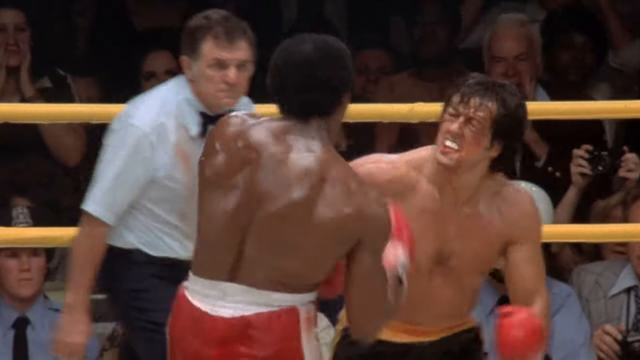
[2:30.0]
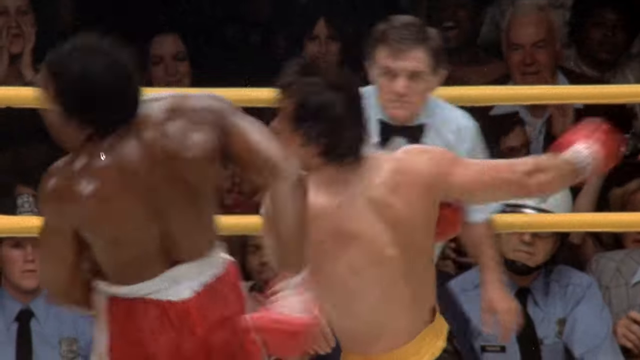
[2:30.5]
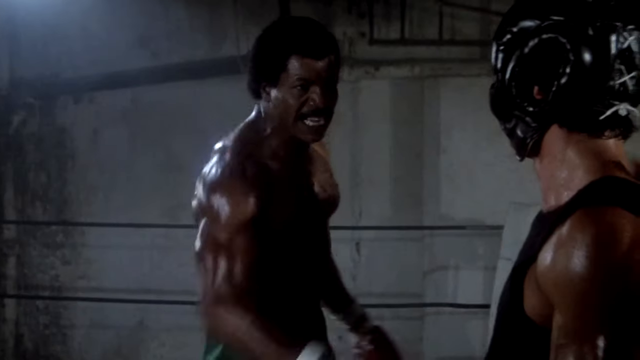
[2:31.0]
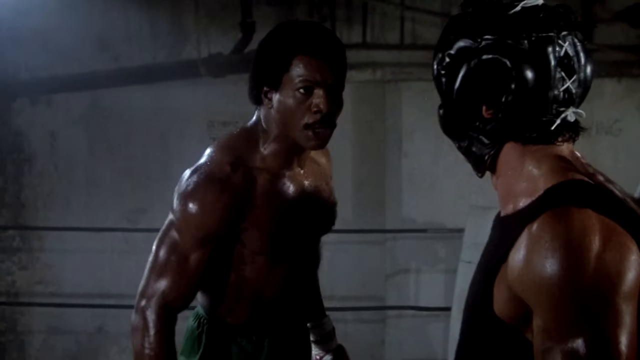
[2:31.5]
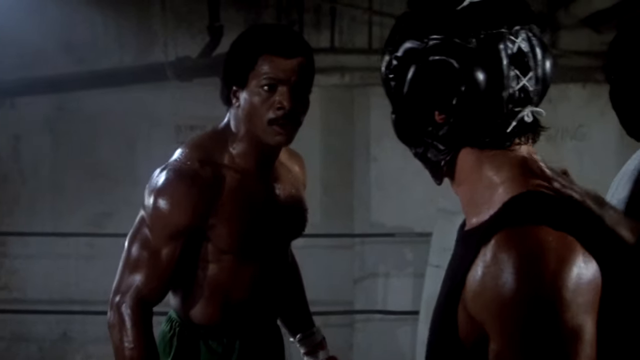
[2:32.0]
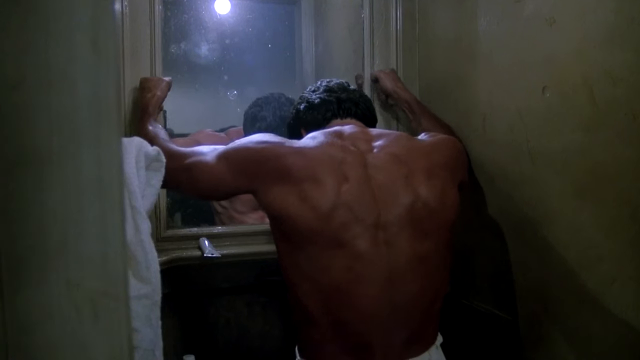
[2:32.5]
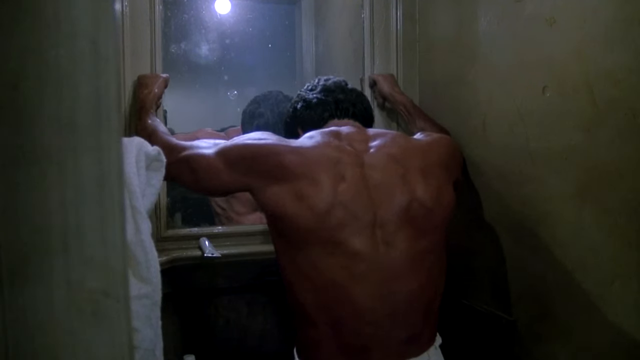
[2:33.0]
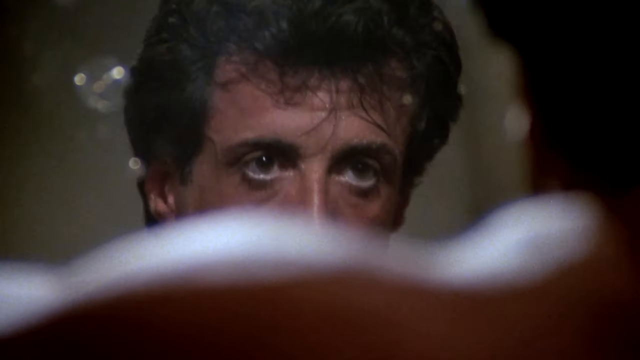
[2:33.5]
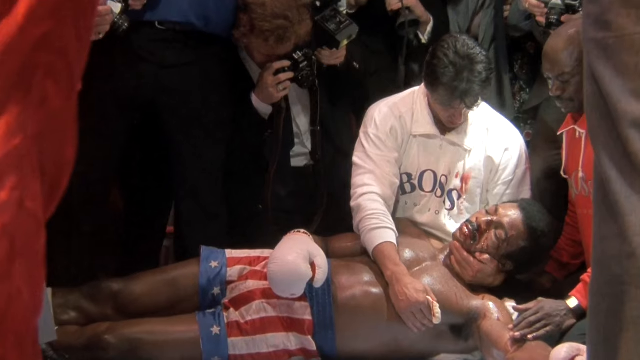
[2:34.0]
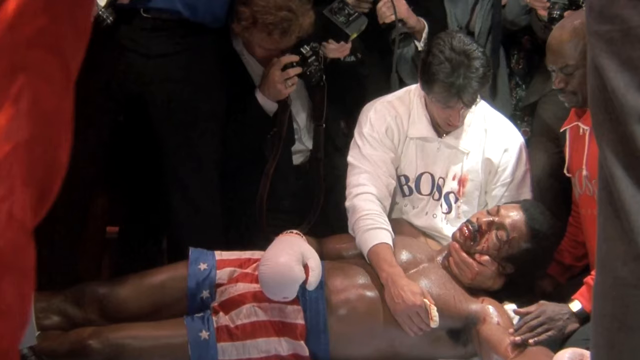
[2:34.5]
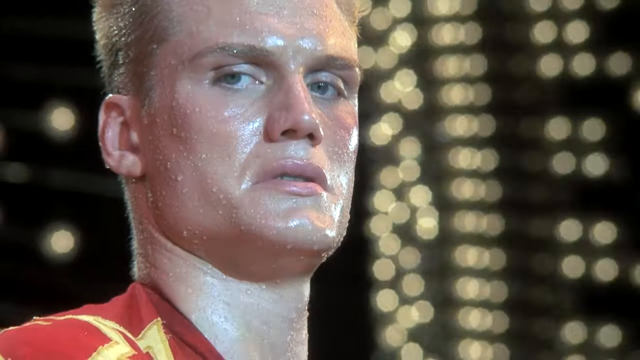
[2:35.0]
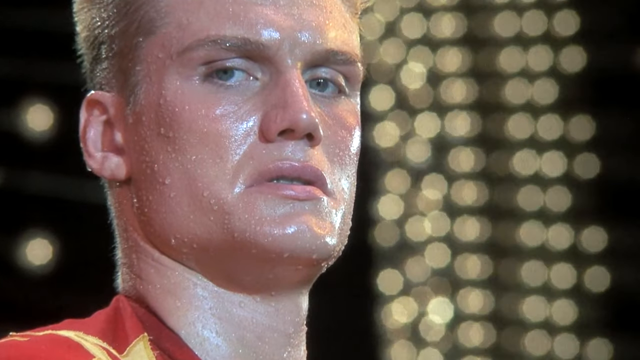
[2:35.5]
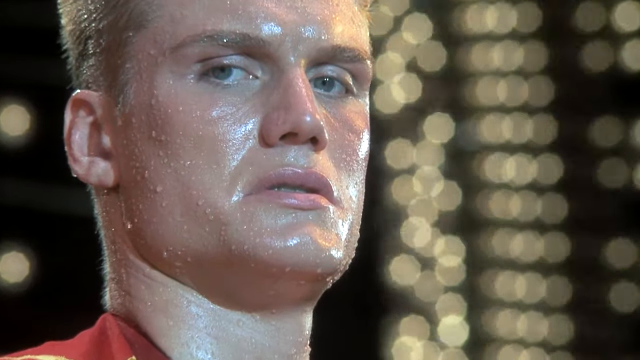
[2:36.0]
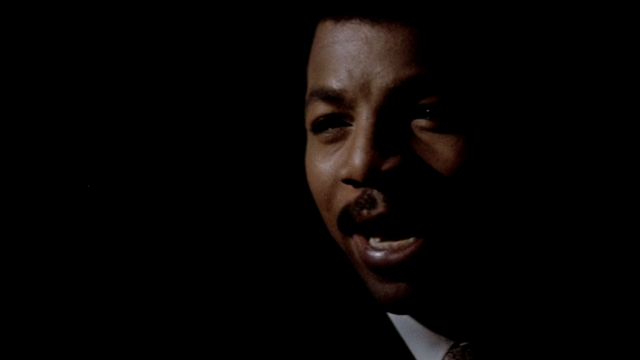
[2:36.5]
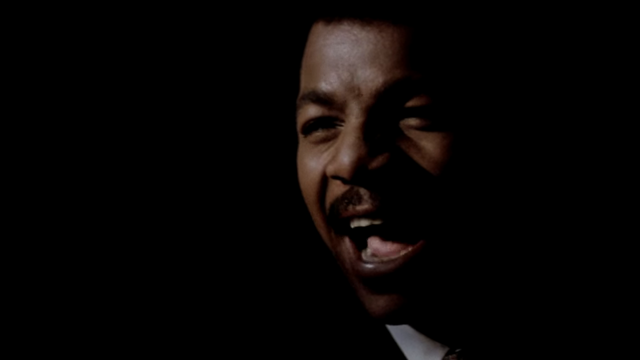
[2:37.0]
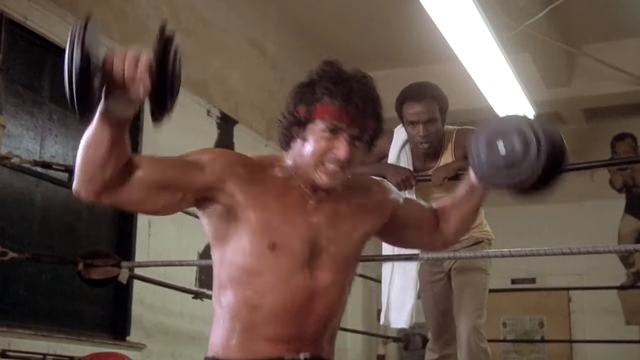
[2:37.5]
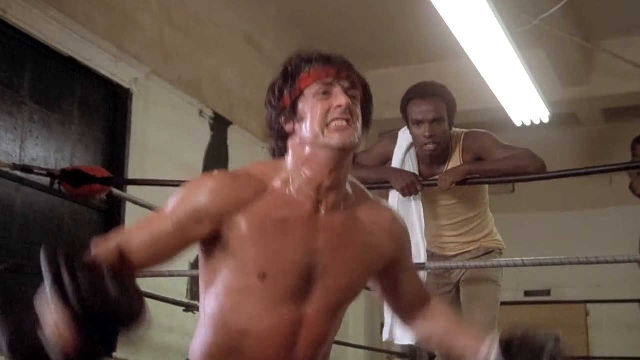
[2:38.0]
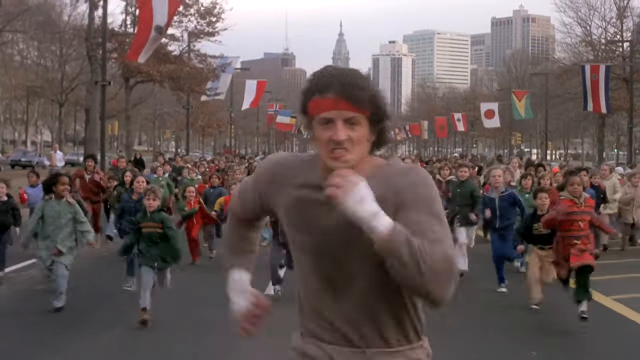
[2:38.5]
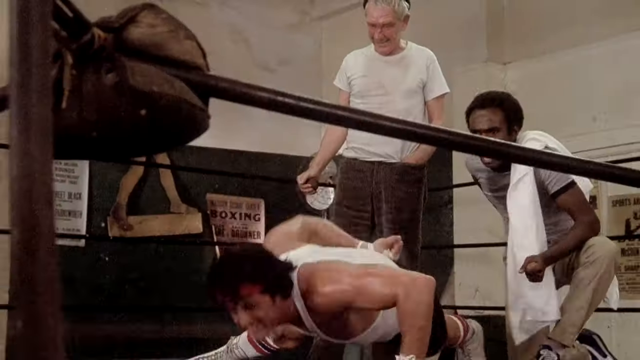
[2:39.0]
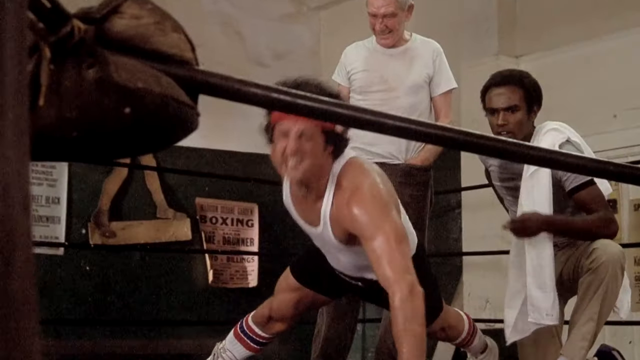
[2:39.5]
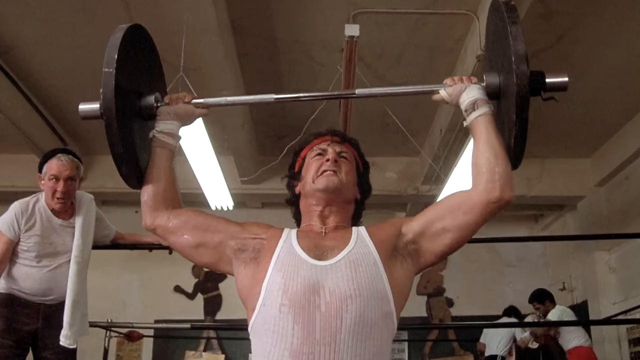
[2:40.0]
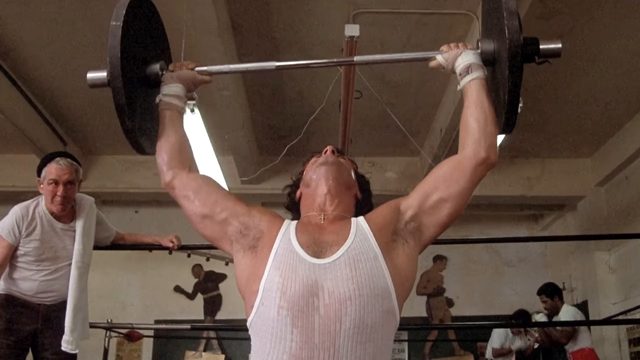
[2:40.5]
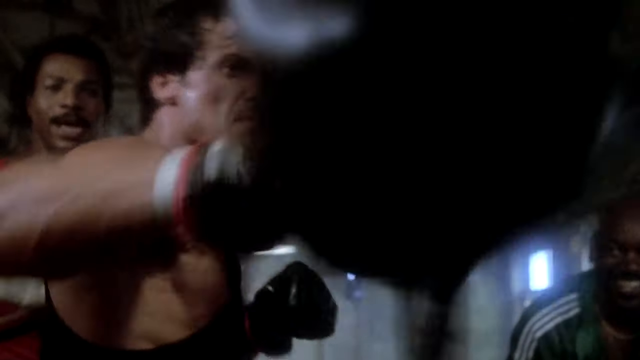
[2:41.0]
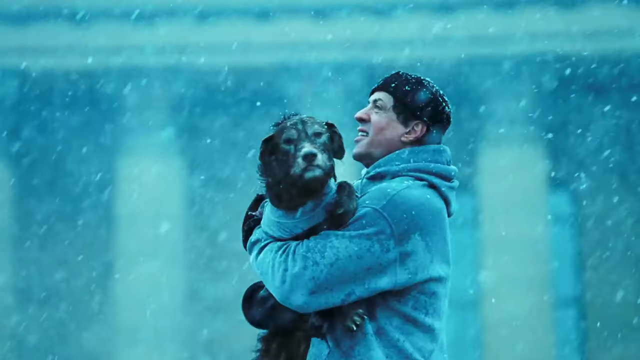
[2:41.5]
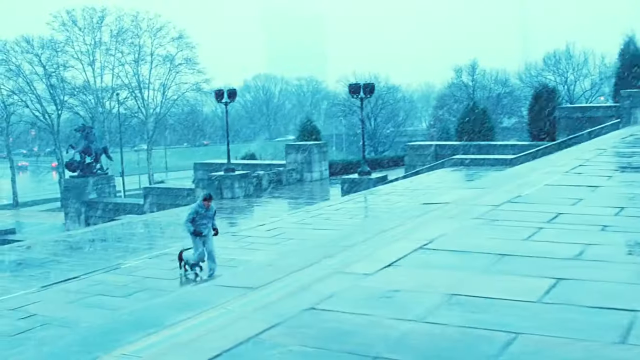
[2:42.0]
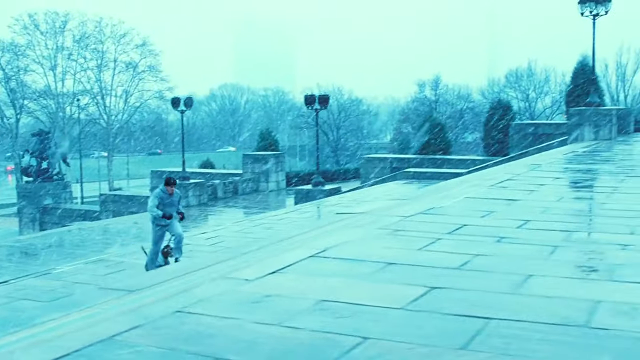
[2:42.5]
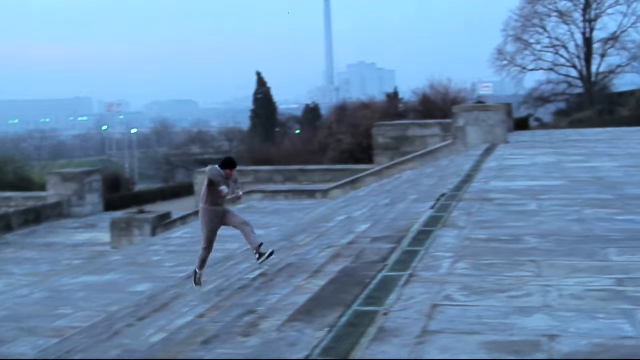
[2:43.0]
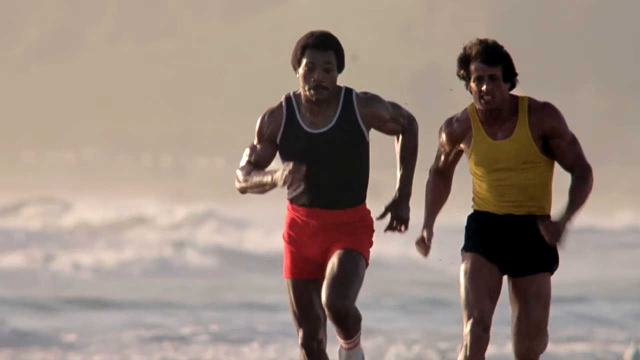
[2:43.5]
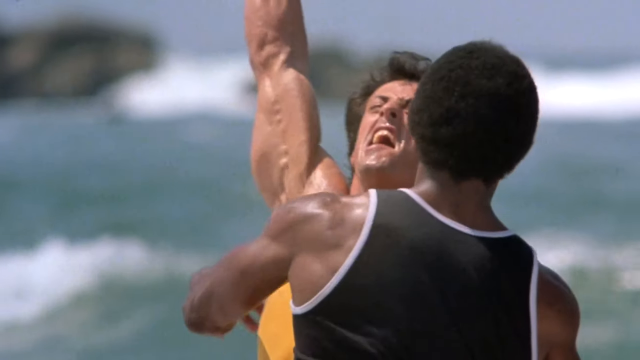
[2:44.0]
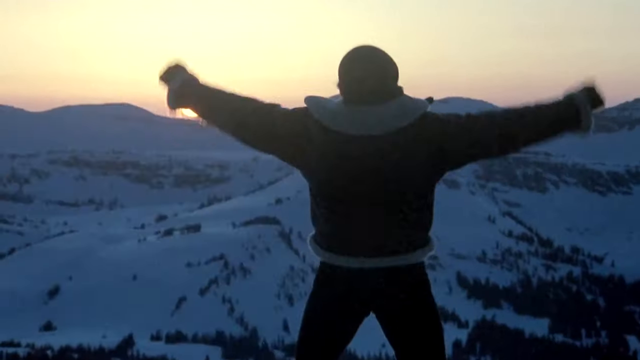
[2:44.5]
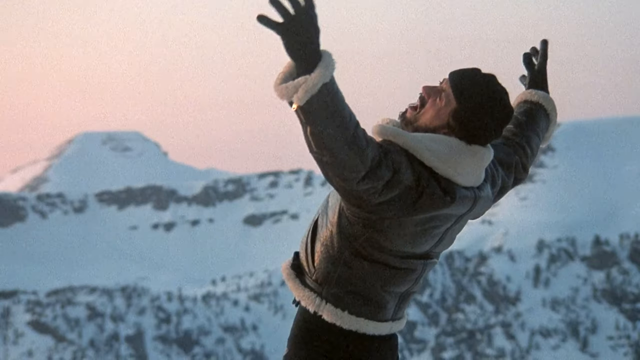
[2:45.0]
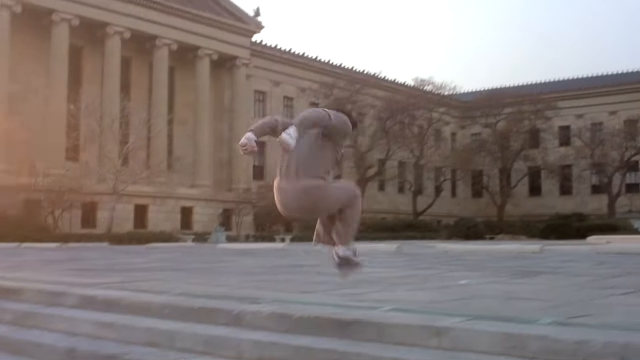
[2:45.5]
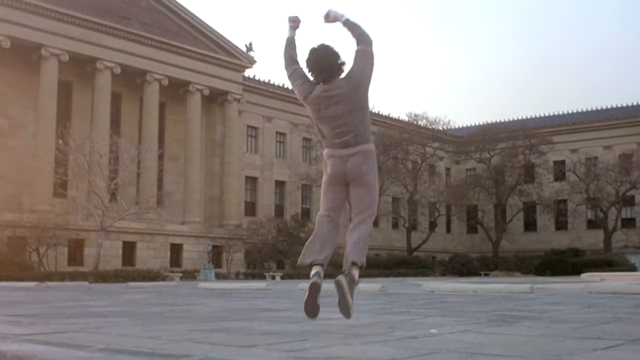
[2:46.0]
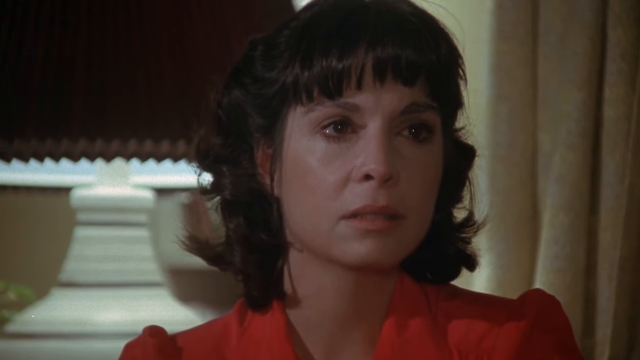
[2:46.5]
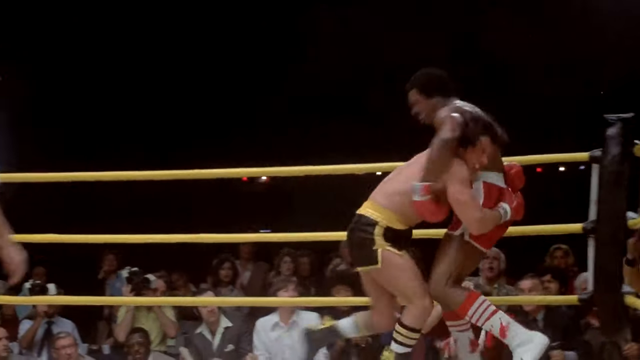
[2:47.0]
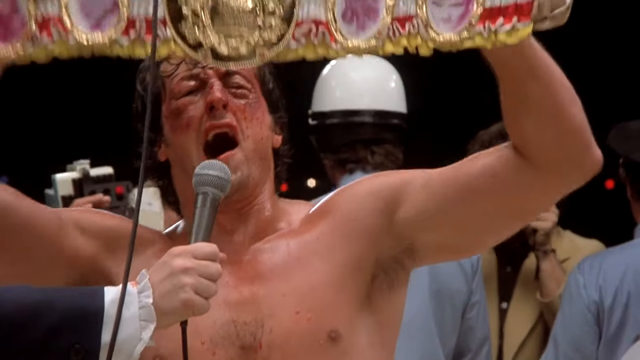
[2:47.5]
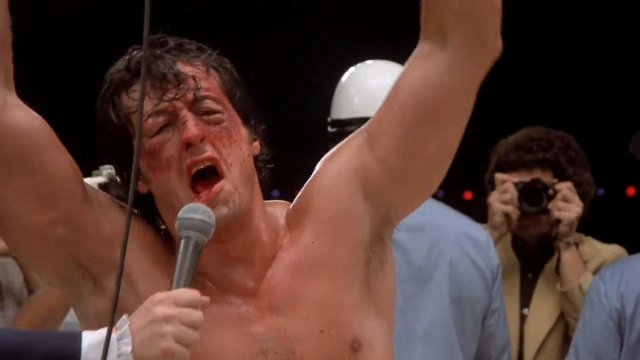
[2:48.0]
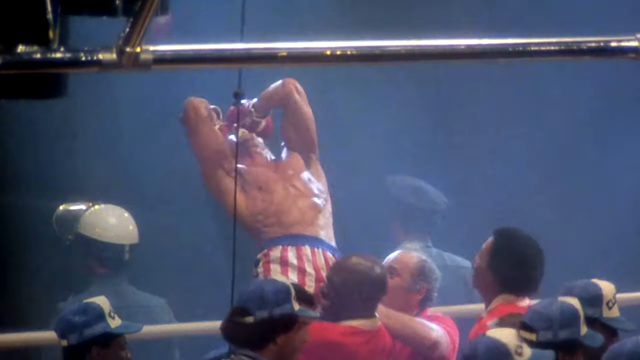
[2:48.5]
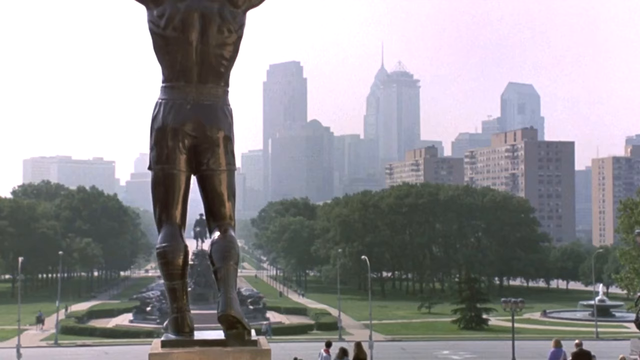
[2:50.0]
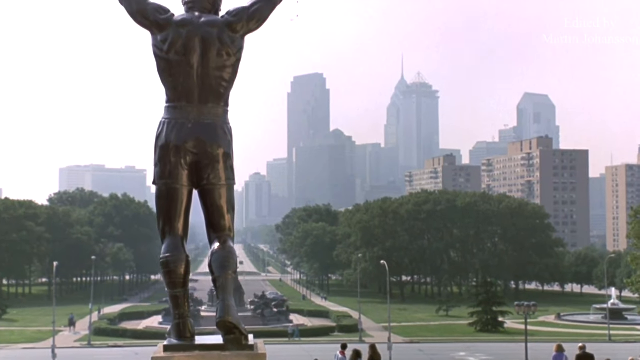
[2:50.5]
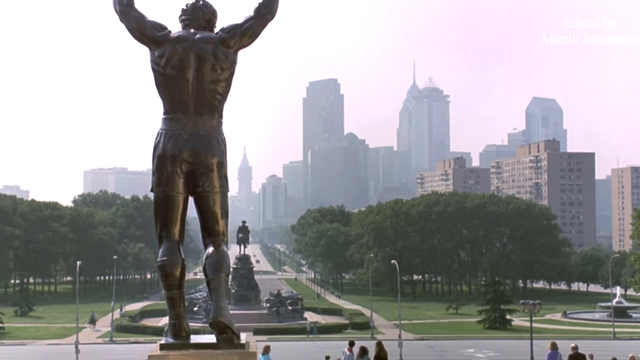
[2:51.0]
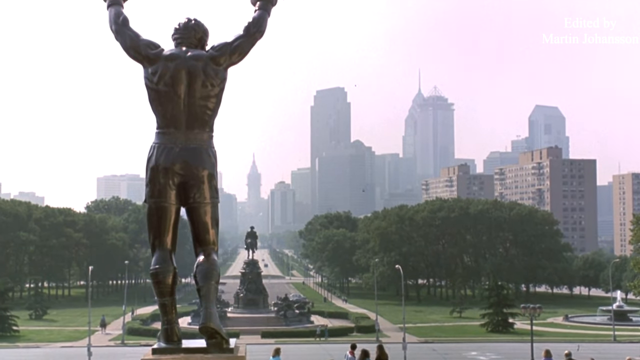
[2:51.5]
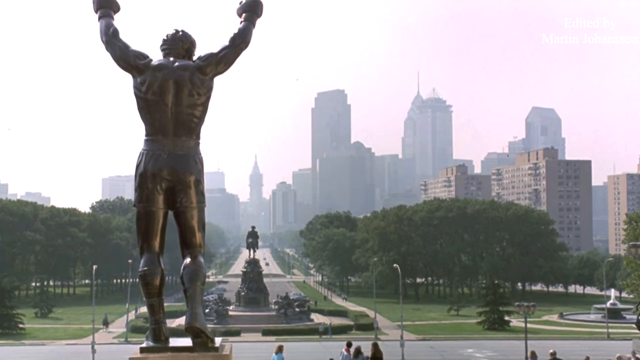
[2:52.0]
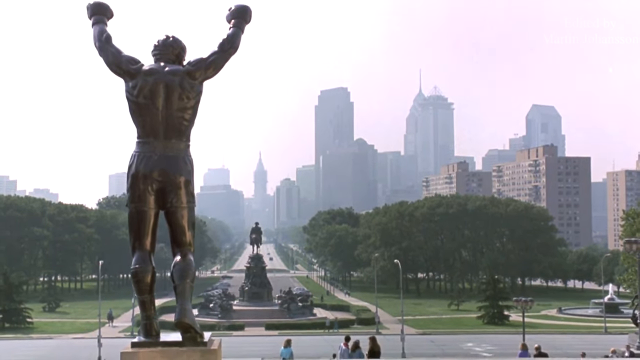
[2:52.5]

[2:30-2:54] In one particular fight, the main character fiercely lands many blows to his opponent's head, and the opponent falls down. The main character, apparently the winner, cheers. The referee in a white shirt oversees the match, and the ring has yellow ropes. In the dark background, fans are cheering. A fierce conversation is shown between the main character and his opponent, who is black. The white man and the black man then train together, running and jogging together. The main character also trains with a group of people, running with them in an open field, and climbs stairs with a dog, doing all sorts of training for the fight.